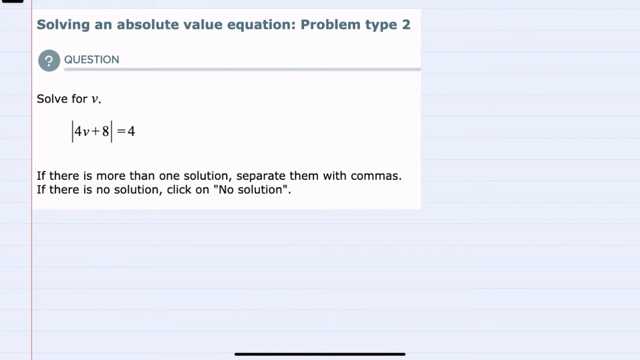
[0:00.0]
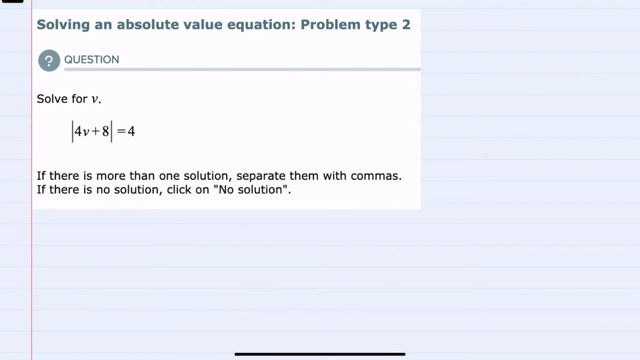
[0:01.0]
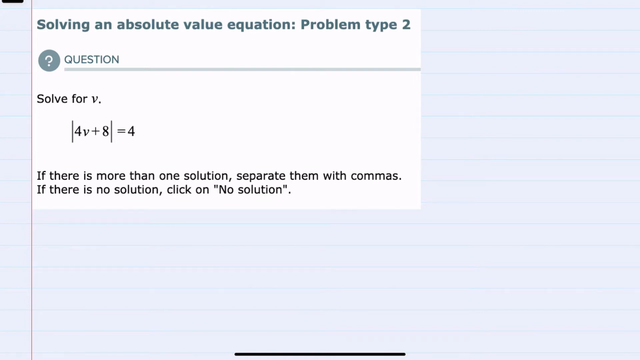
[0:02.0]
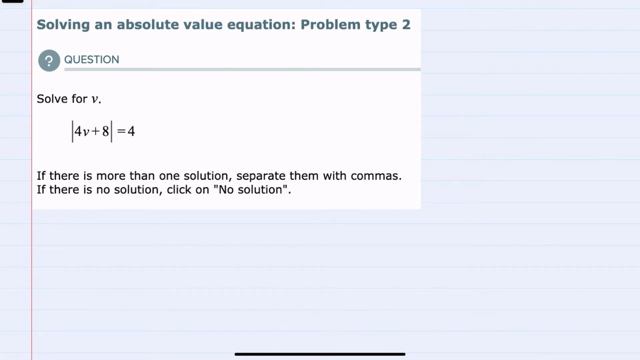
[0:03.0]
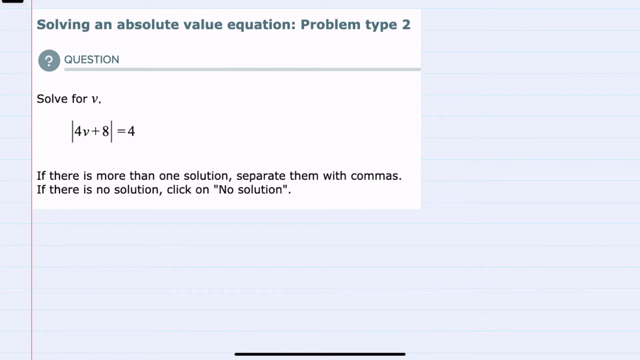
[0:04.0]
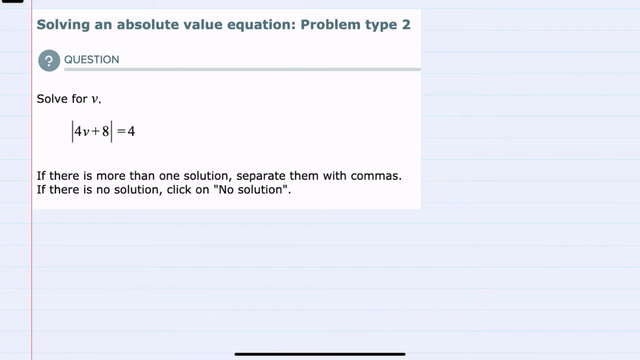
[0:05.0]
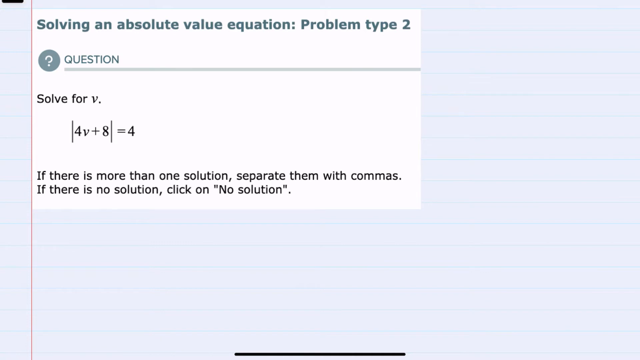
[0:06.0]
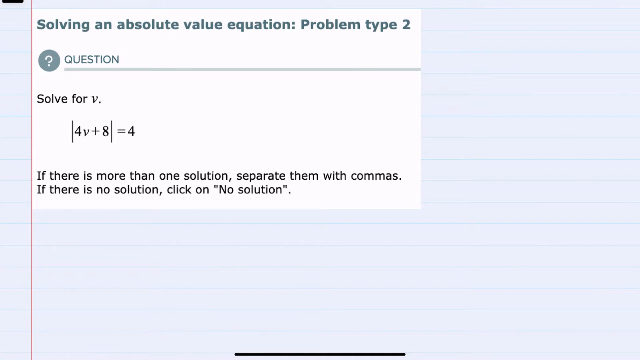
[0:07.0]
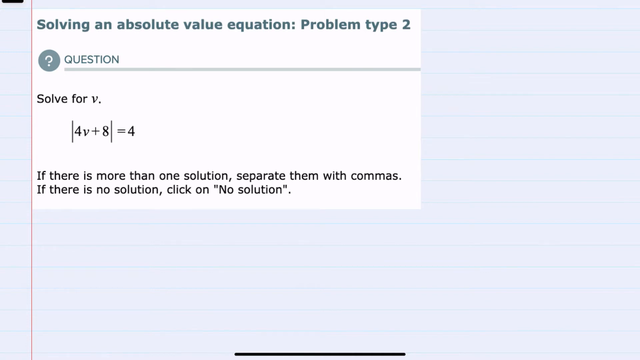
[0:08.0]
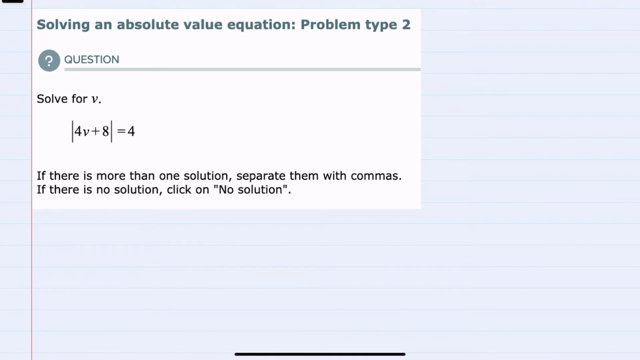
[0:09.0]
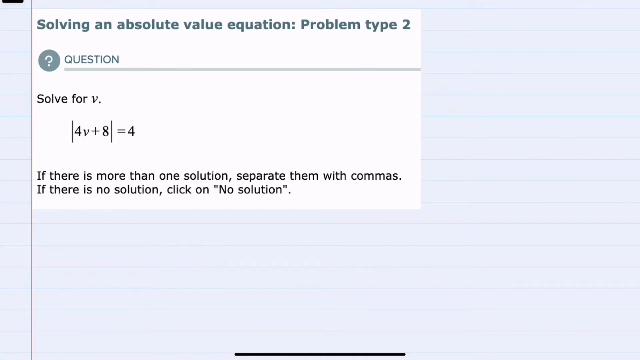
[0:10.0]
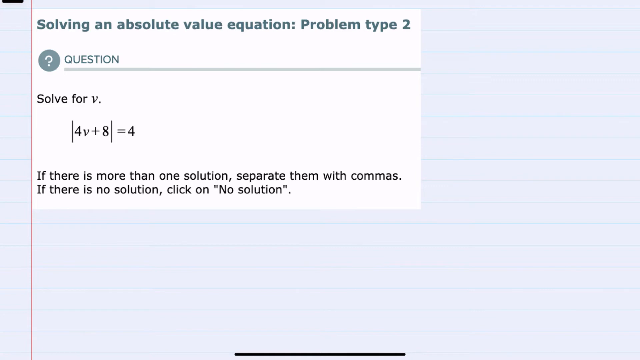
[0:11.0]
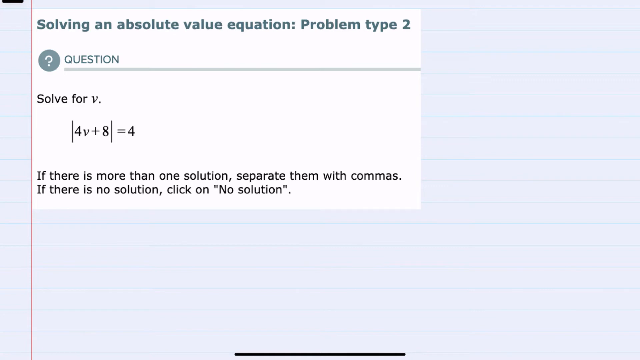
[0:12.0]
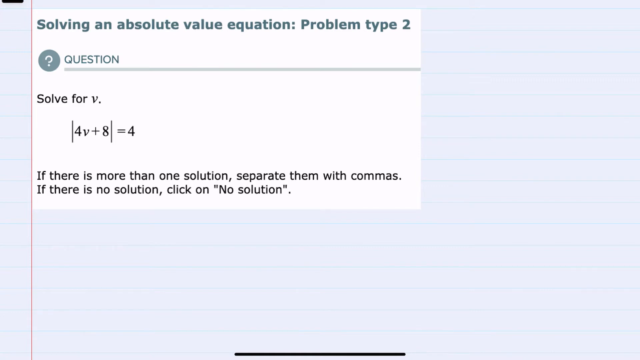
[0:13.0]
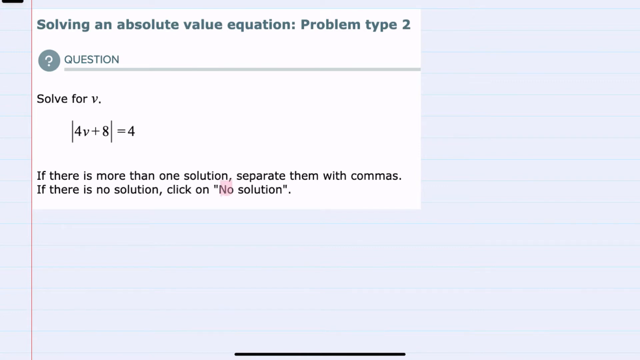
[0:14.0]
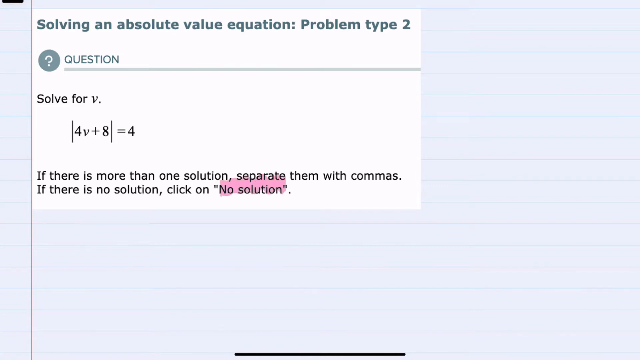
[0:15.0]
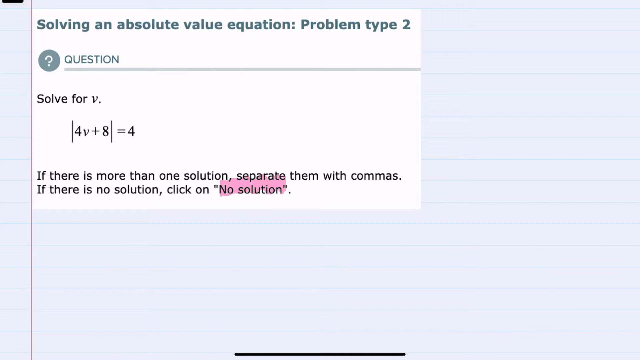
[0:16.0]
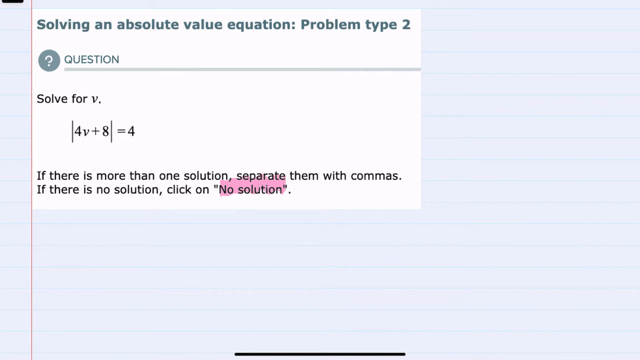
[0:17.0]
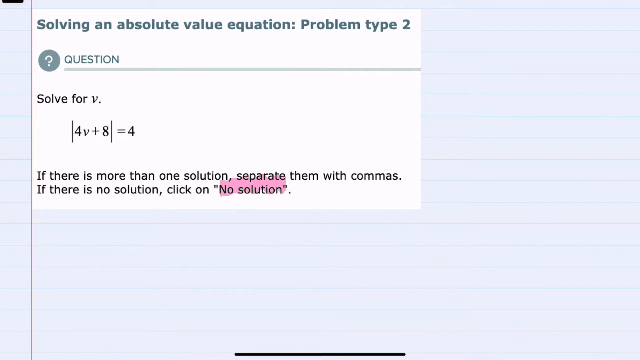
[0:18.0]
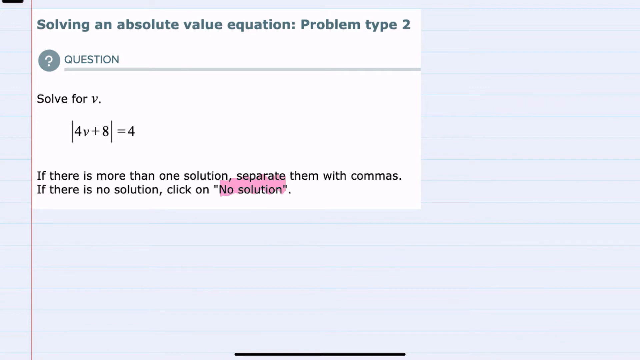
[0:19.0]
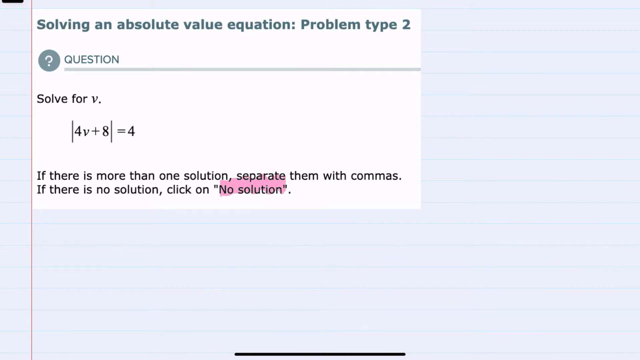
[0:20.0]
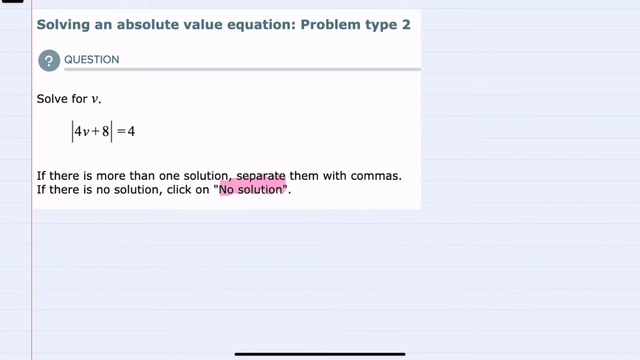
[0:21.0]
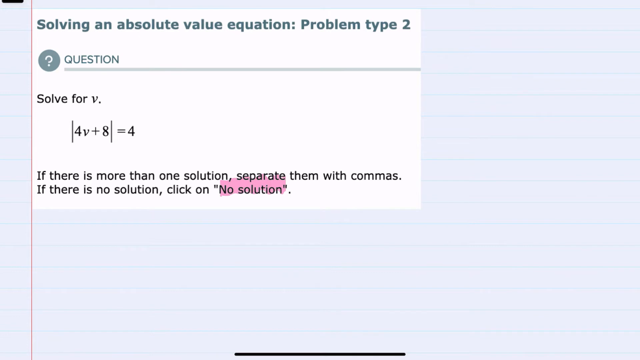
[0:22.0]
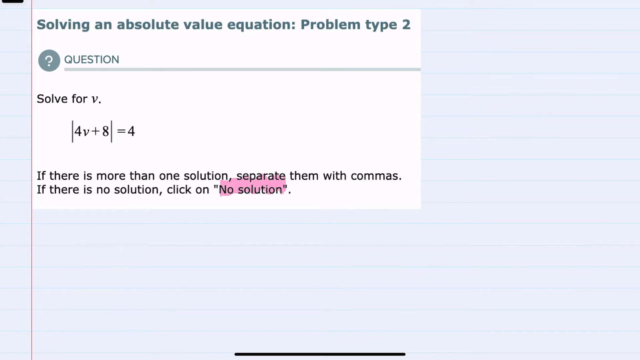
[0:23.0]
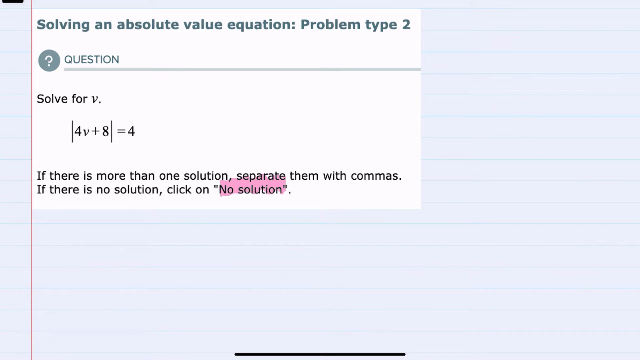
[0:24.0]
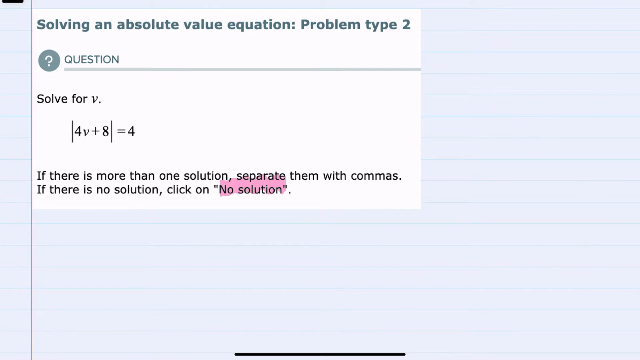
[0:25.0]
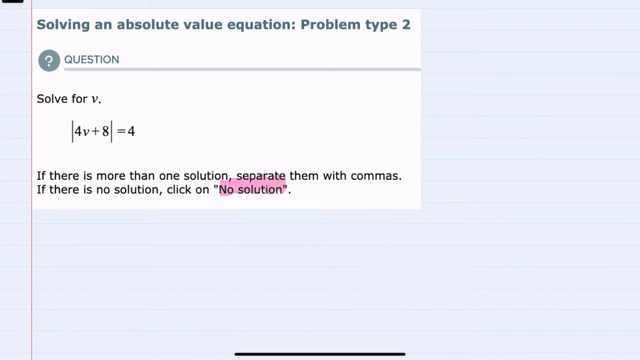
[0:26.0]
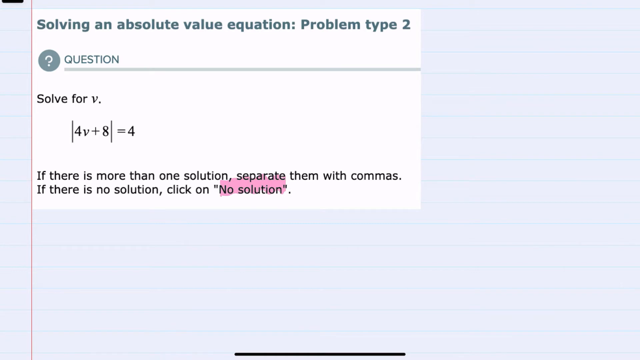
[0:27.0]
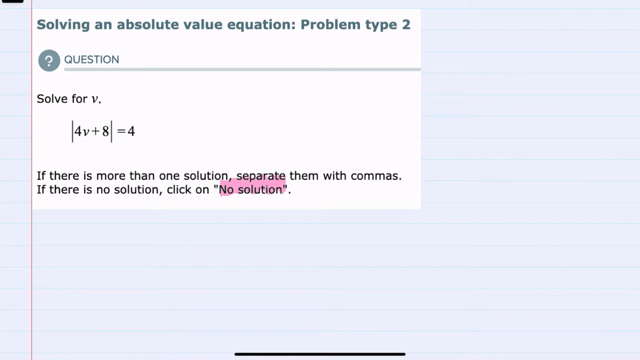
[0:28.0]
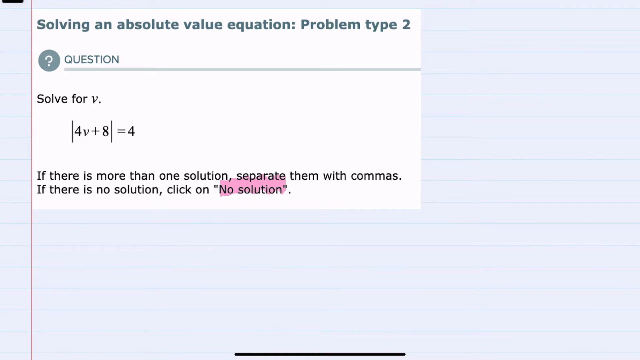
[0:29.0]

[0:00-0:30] The screen shows a piece of paper with the text "solving an absolute value equation problem type 2", an icon of a question mark, the word "question" and "solve for v". The question reads "4v + 8 = 4". Writing below gives the instructions: "If there is more than one solution, separate them with commas. If there is no solution, pick no solution." The screen stays on this for a while. Then "no solution" is highlighted in pink, and the highlight is left there.